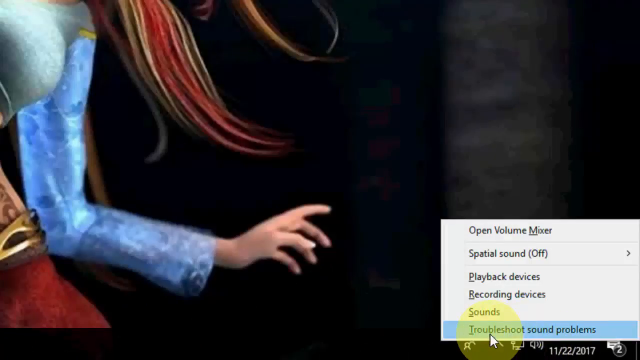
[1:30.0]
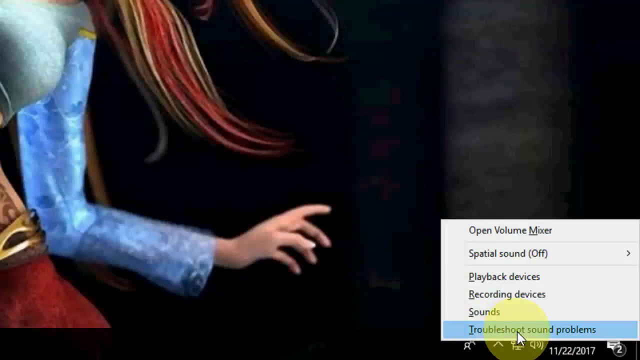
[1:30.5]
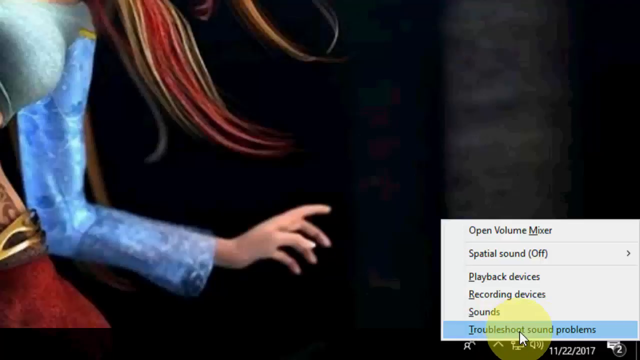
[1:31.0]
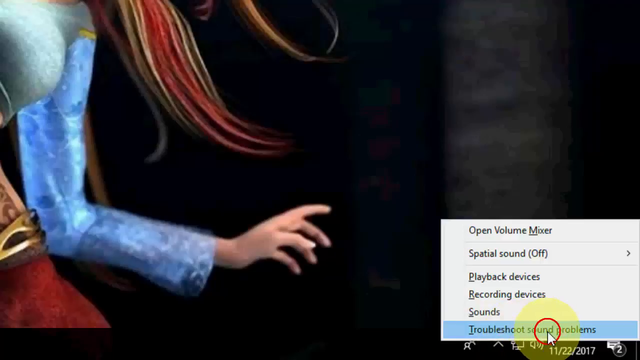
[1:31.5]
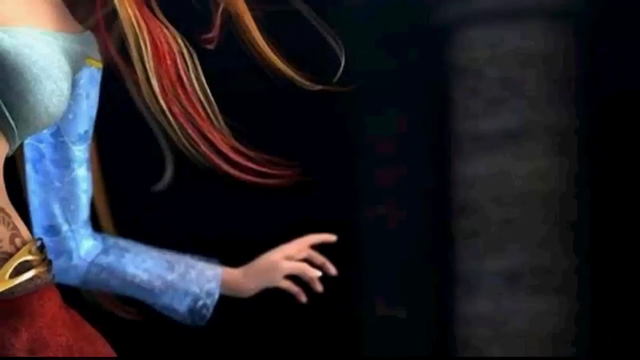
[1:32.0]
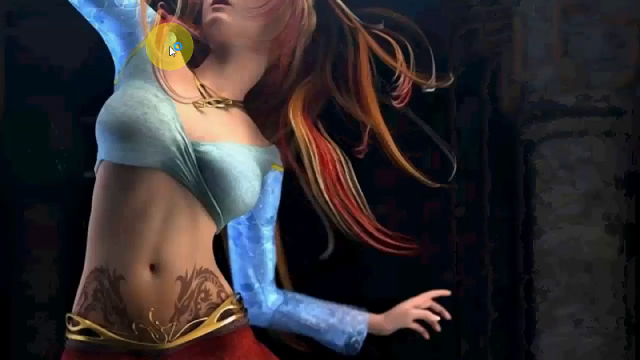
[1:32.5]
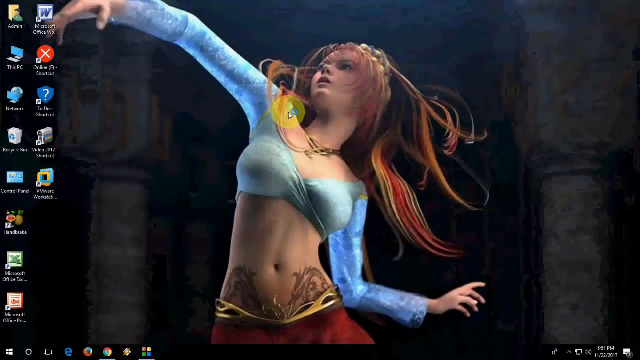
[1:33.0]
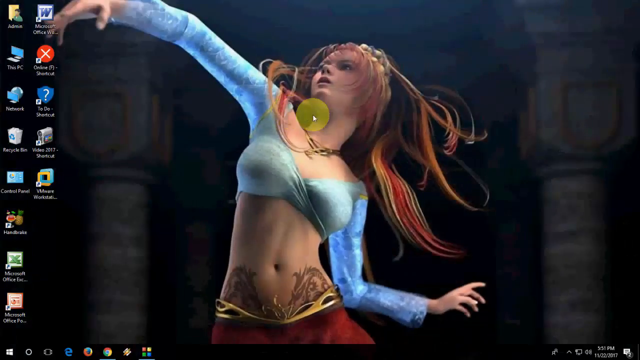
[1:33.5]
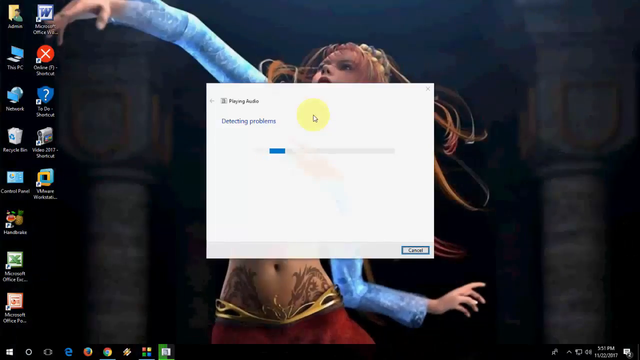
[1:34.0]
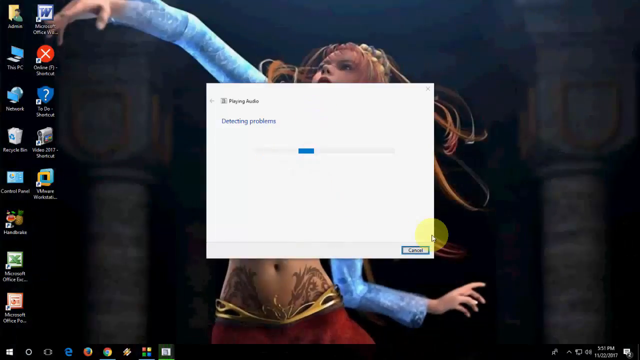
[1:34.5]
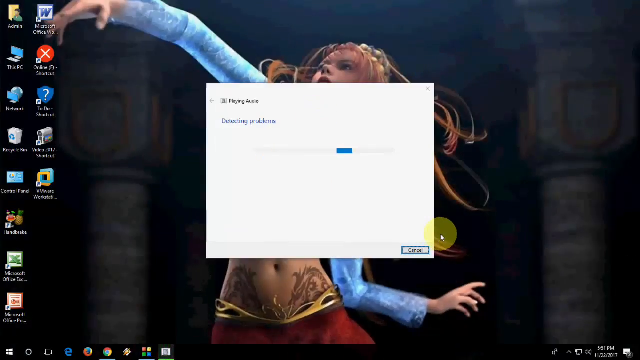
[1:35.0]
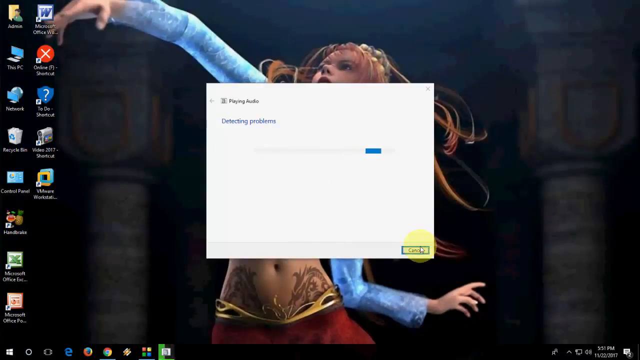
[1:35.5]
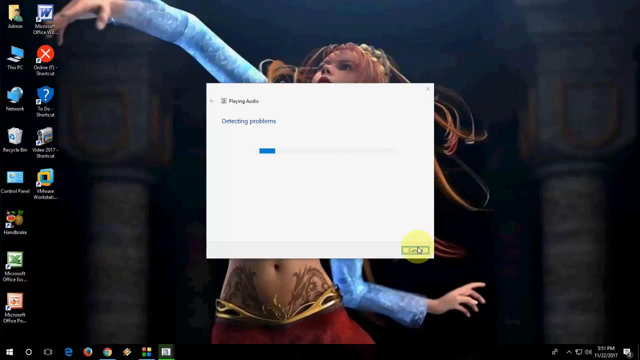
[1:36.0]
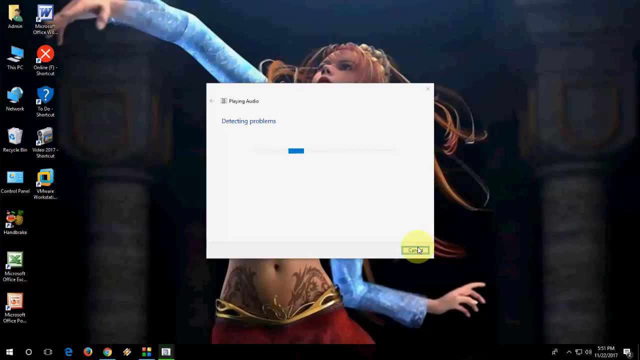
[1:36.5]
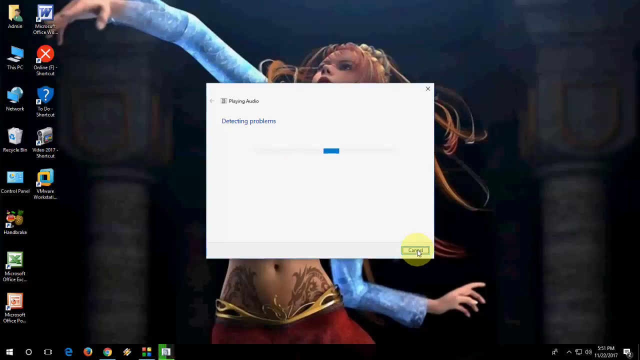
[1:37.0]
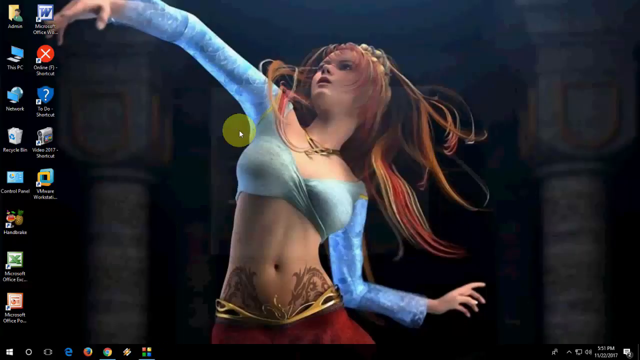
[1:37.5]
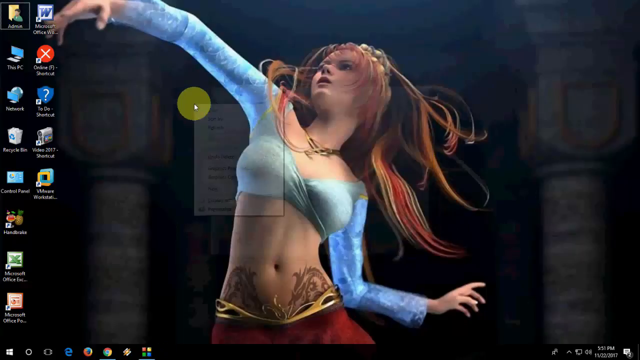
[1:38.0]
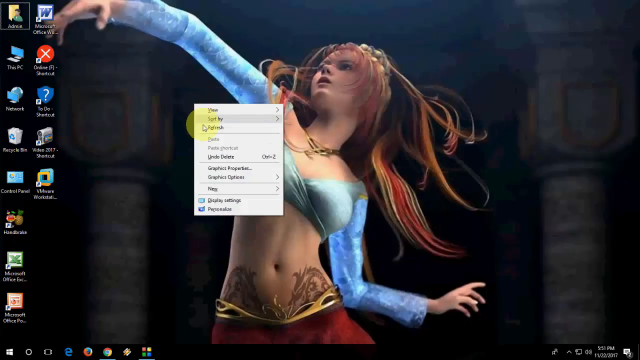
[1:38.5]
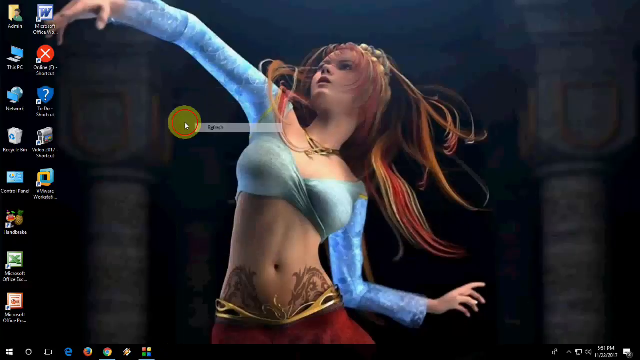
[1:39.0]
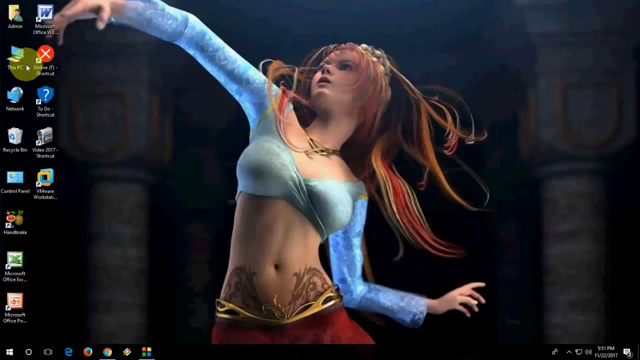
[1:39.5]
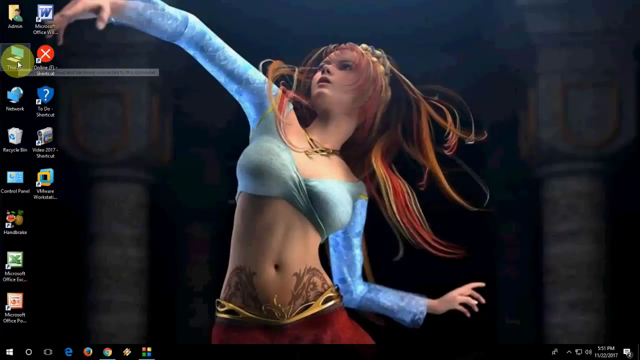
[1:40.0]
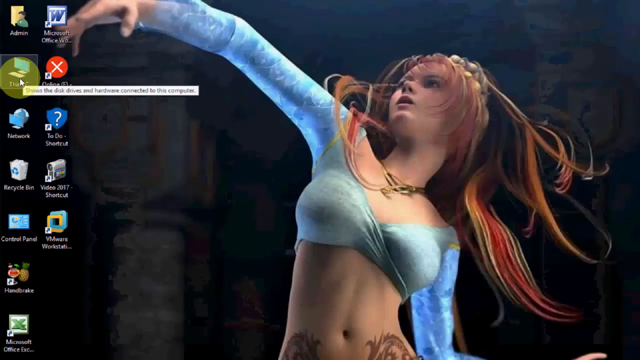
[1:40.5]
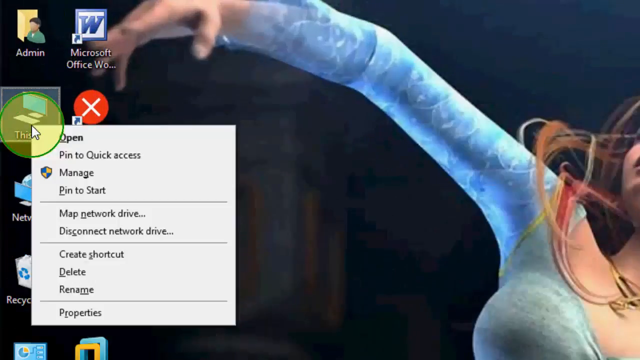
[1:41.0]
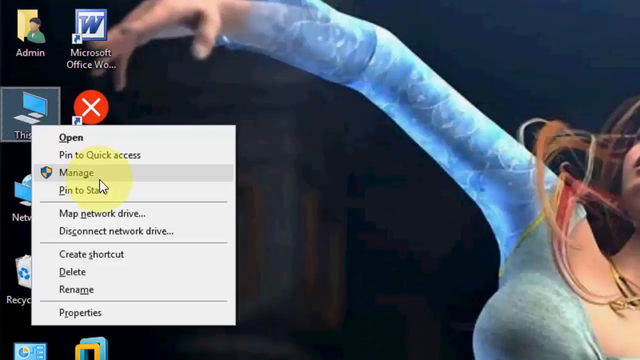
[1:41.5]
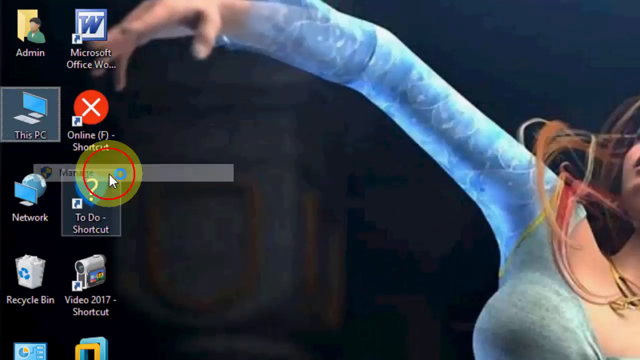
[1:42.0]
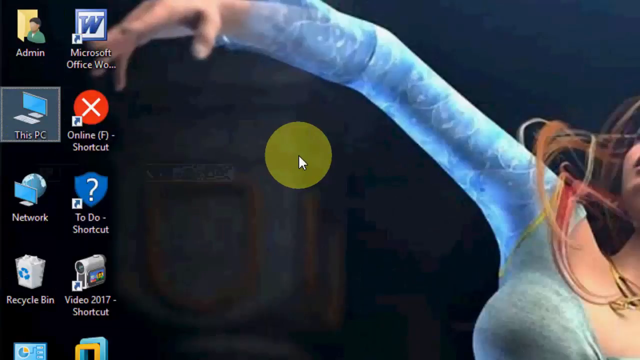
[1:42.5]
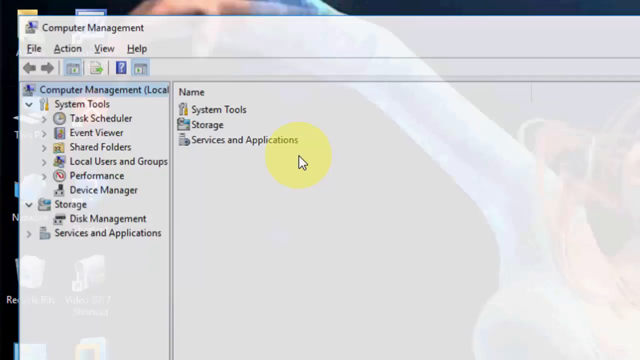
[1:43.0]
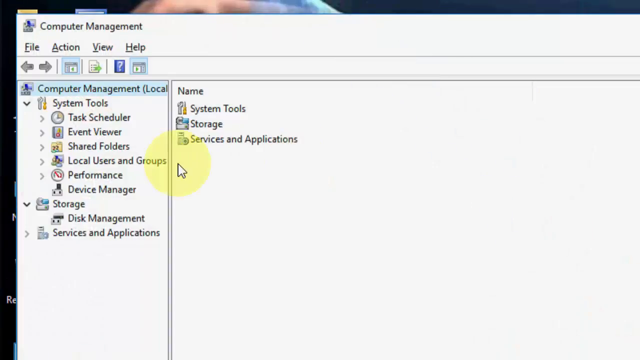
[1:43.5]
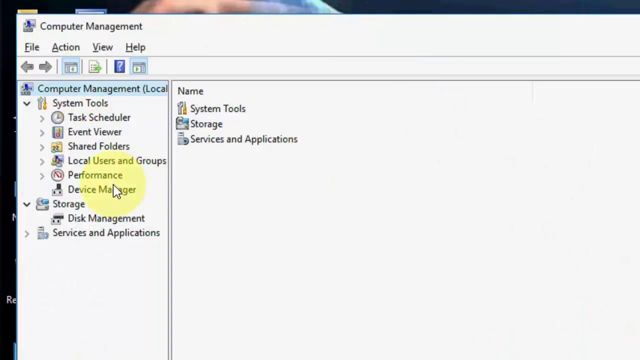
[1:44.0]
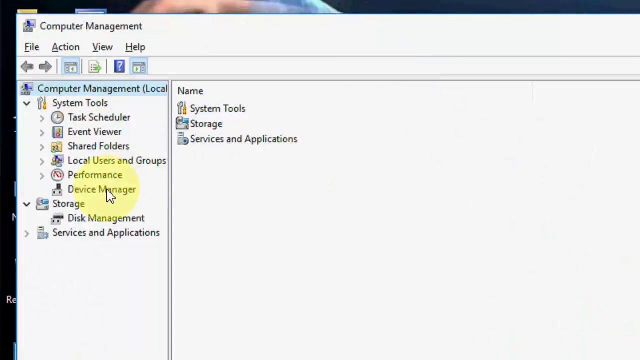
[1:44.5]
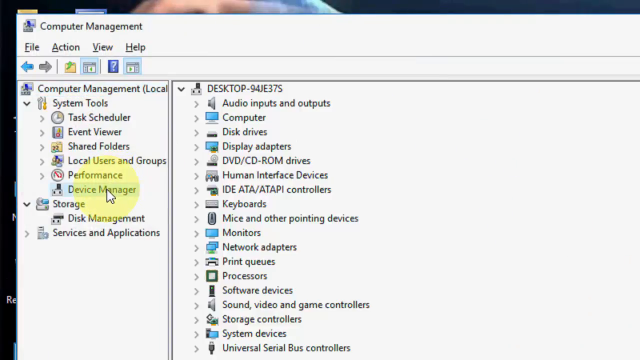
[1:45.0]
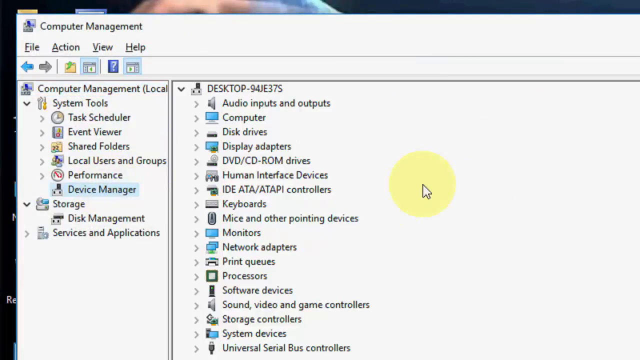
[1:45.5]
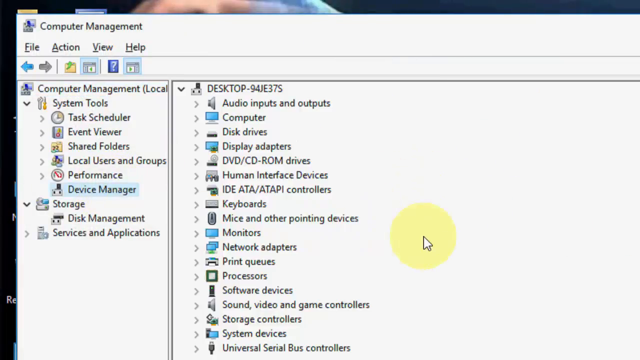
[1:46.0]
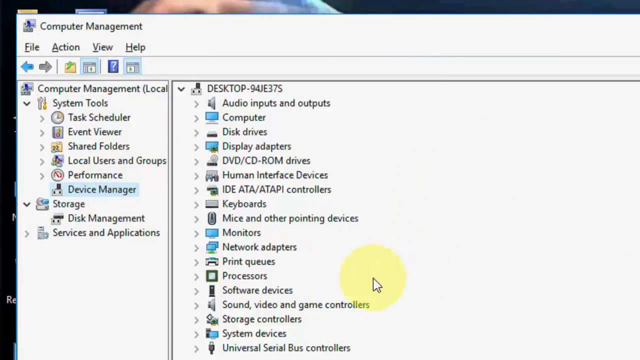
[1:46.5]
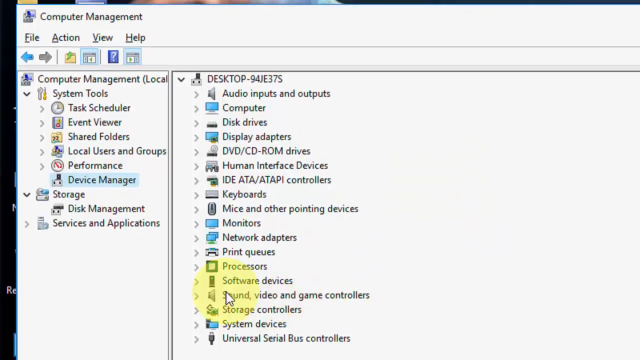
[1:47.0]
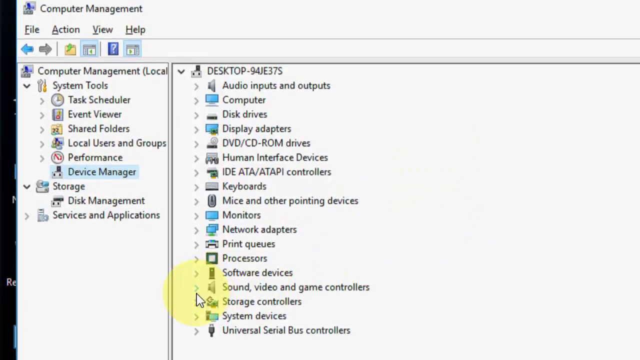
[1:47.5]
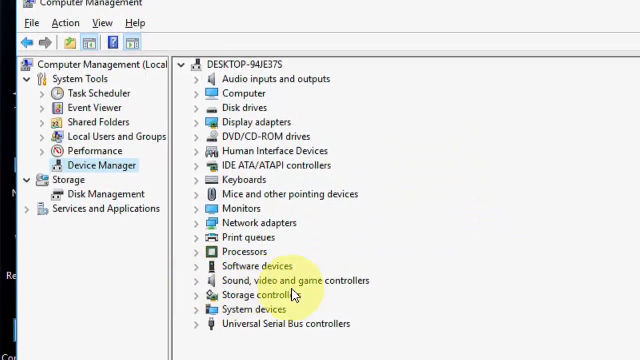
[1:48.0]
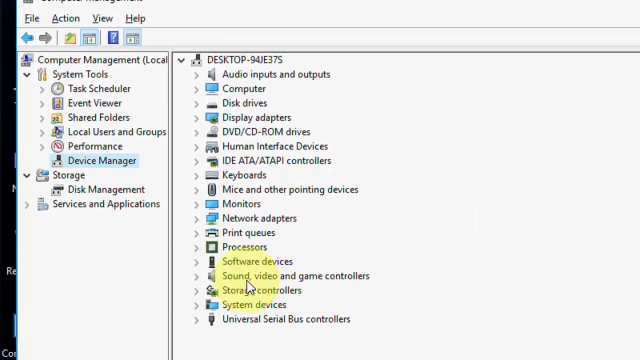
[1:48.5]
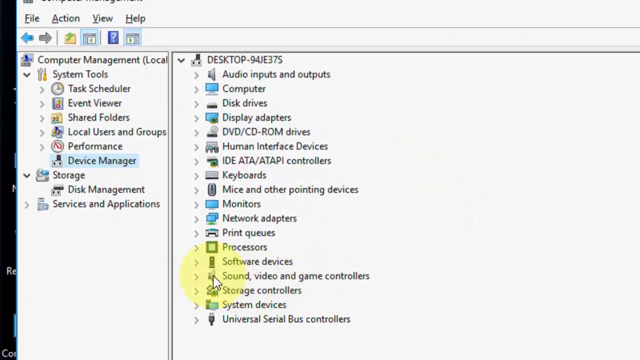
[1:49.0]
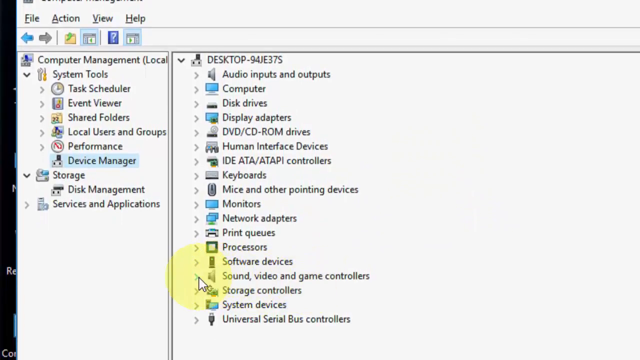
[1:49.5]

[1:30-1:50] A zoomed-in portion of the desktop is visible, showing the animated character standing there with red hair, blue sleeves and red pants, along with an up-close view of an open menu for the volume and sound manager on Windows. The screen moves around, a mouse cursor pops up, and what looks like a properties box pops up with a little blue scroll bar moving side to side through it, indicating something is loading. The box disappears and another context menu pops up. The view zooms in on the side as the person goes to the device manager, then down to sound, video, and game controllers, apparently to adjust the computer's sound card. Then the screen goes back to showing just the desktop with the menu in the background.